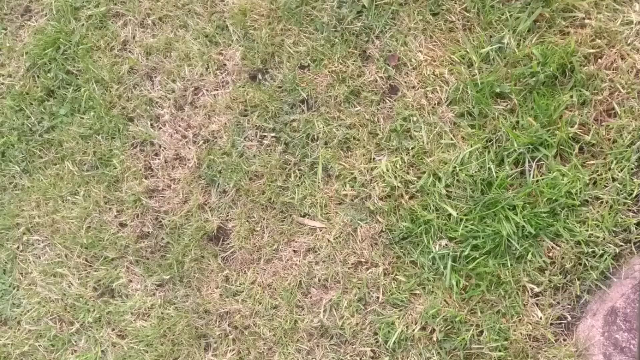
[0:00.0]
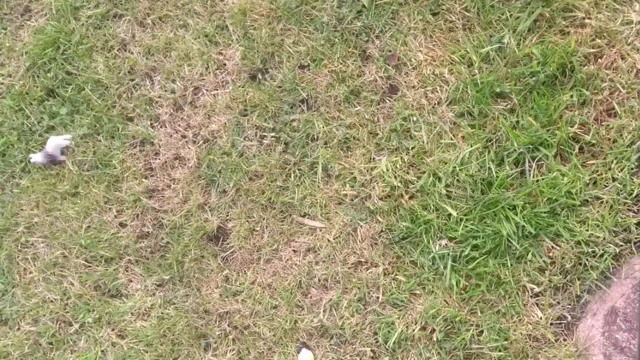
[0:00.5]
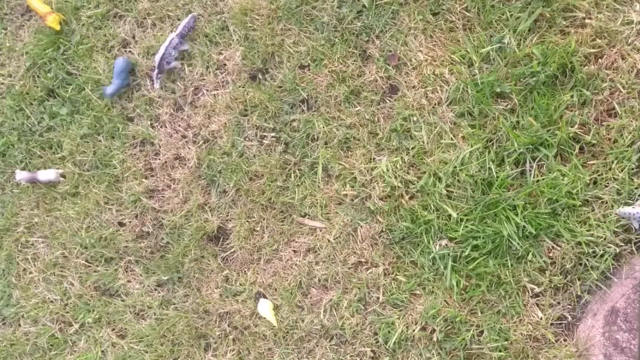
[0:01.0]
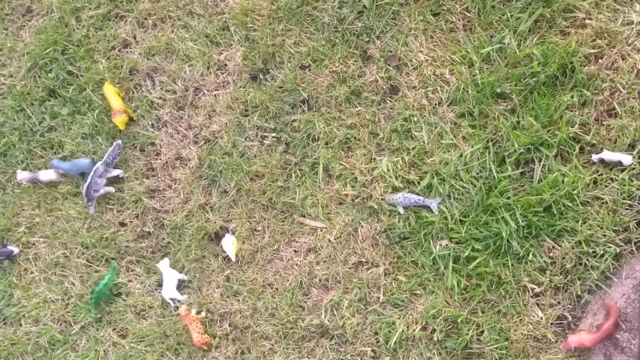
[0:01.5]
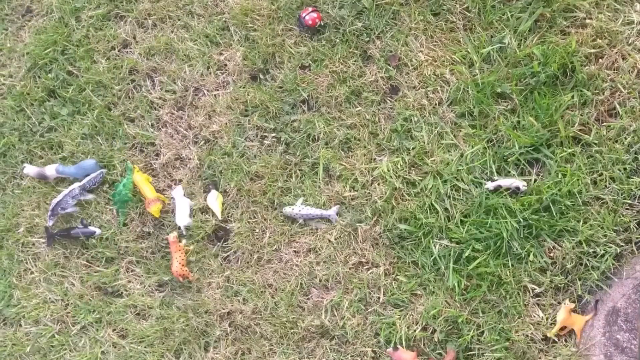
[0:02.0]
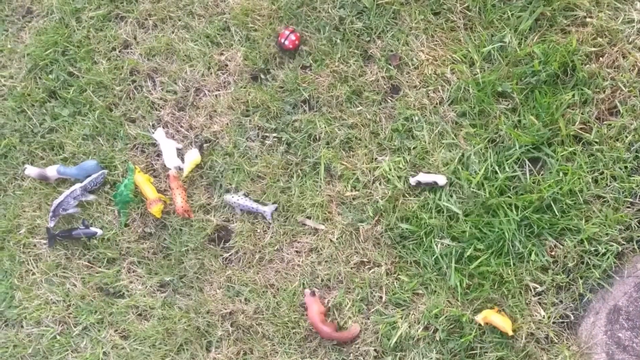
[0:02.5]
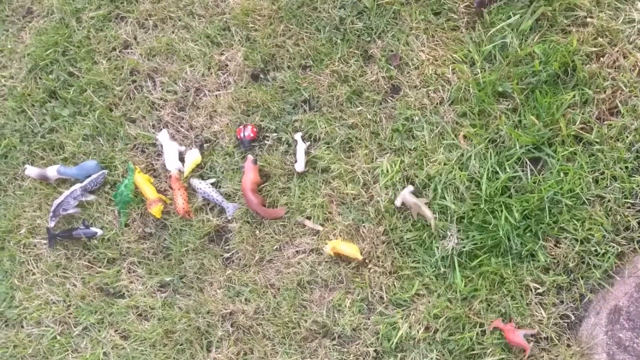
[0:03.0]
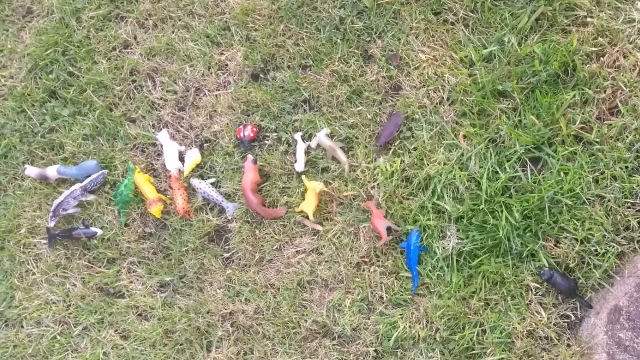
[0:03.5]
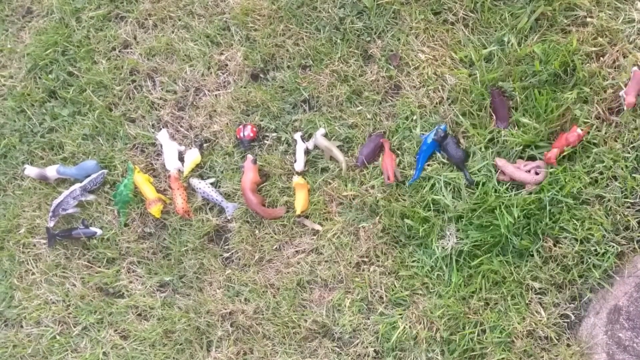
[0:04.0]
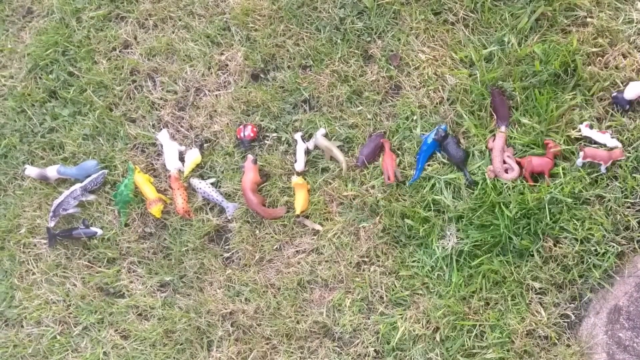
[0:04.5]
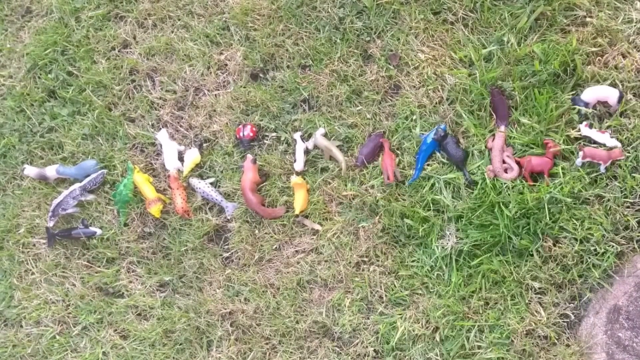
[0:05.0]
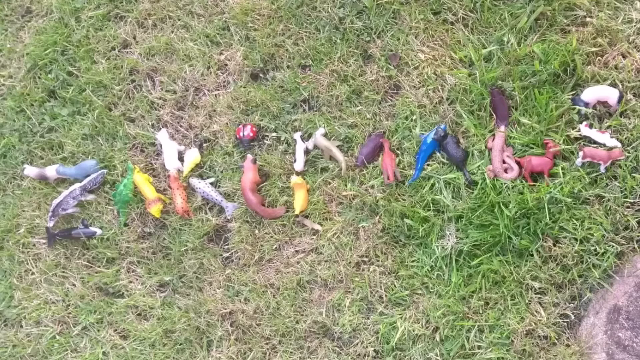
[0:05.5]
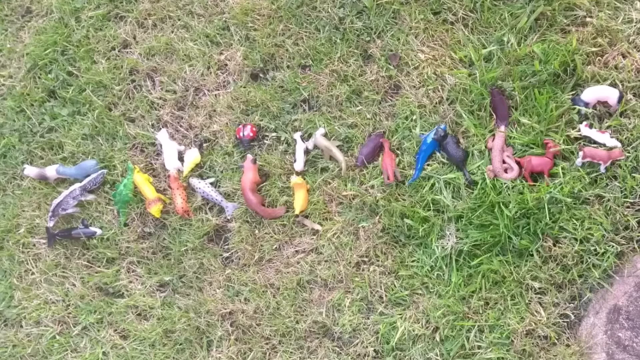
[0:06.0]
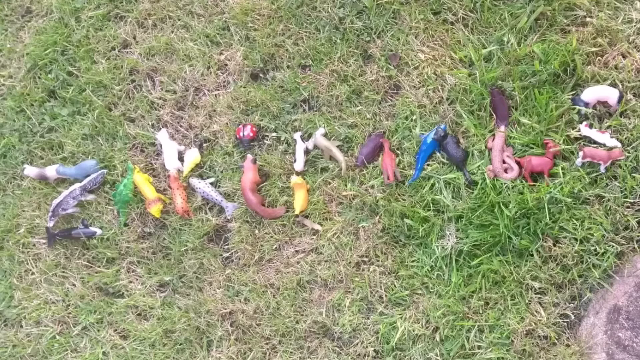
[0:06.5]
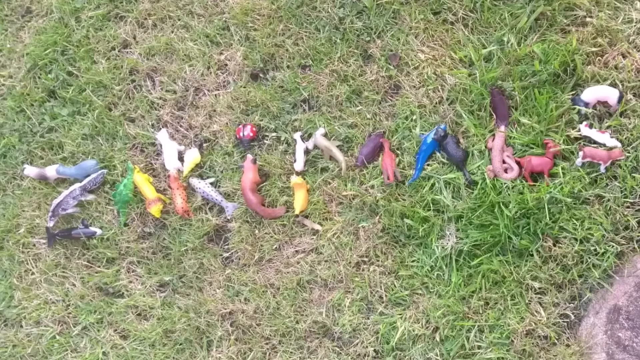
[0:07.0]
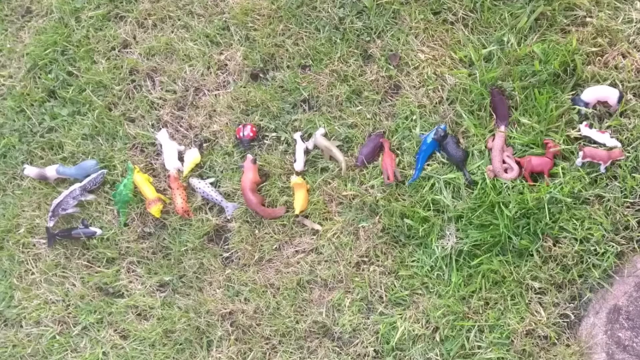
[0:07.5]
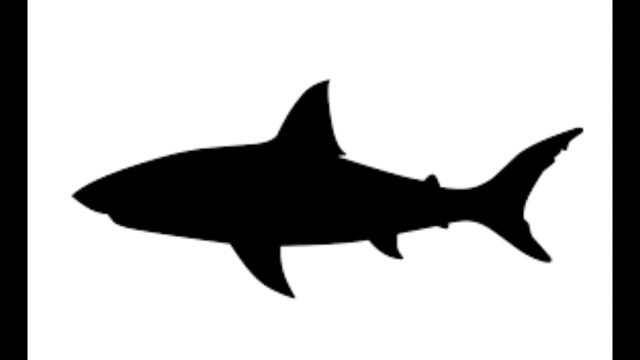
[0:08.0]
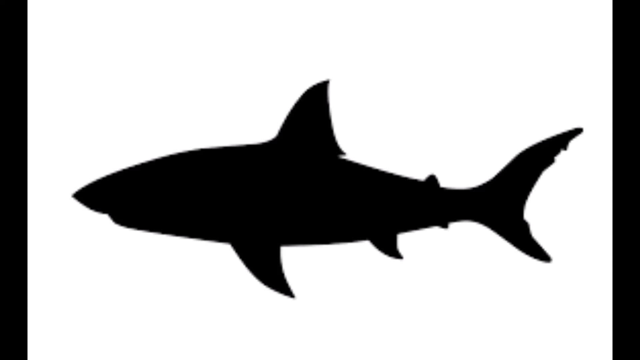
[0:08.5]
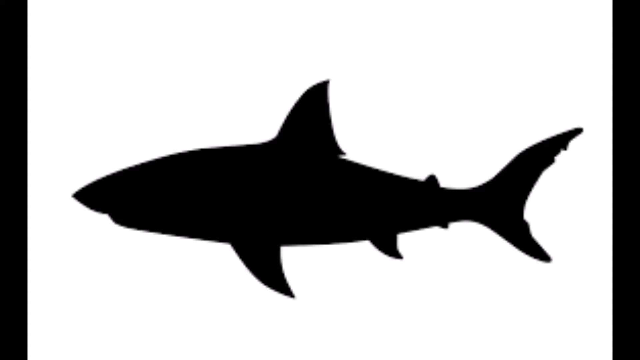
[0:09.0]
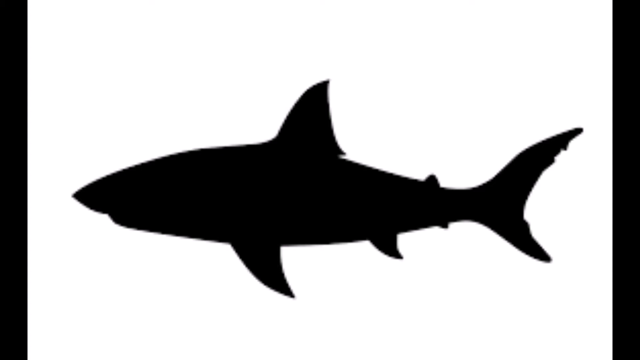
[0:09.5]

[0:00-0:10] Shark figures that look kind of like kids' toys appear, and then the scene goes into a silhouette of a shark. A group of little animals seem almost to come running into the grass, and then they kind of stop. The shark silhouette is a black shark on a white background. Everything is on top of grass that is green, with some of it brown, where all the animals are. The animals look like toys that kids would play with.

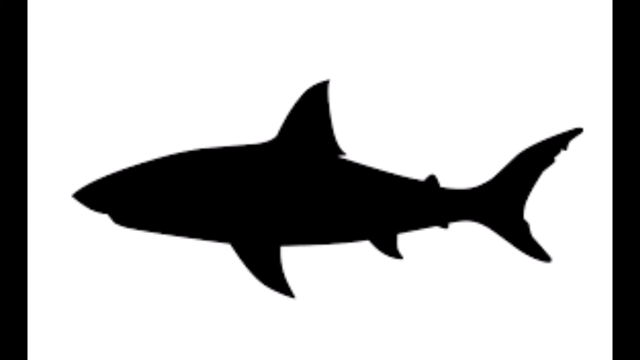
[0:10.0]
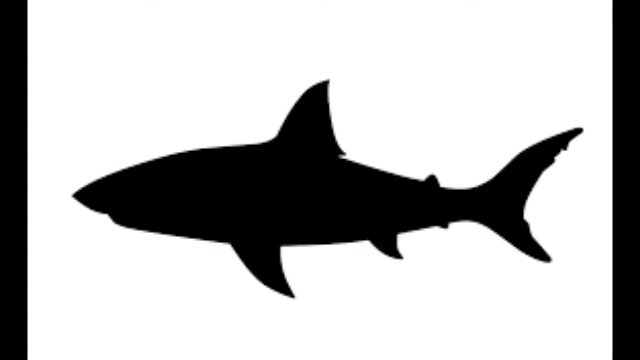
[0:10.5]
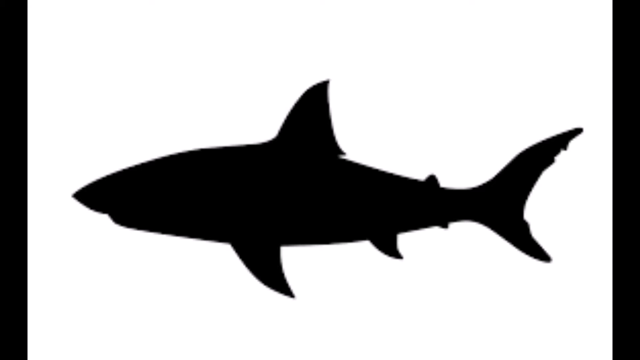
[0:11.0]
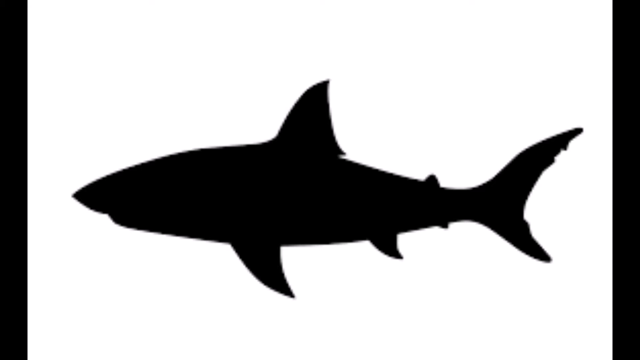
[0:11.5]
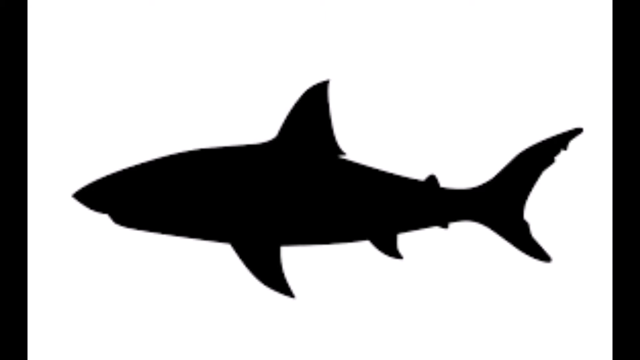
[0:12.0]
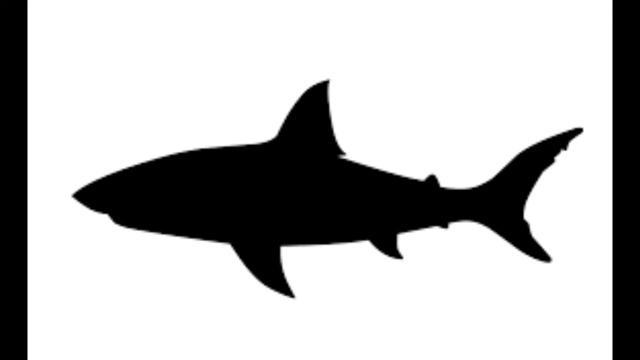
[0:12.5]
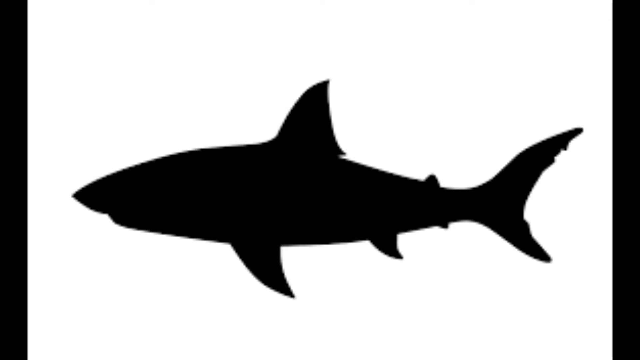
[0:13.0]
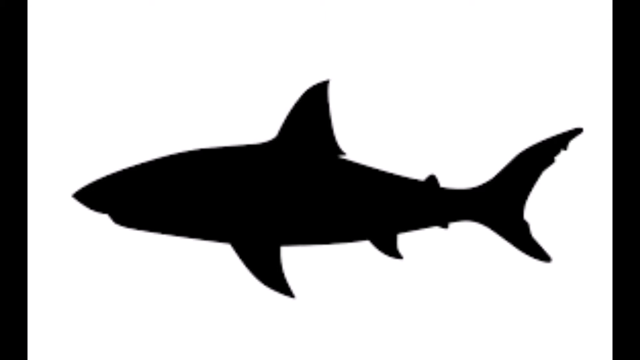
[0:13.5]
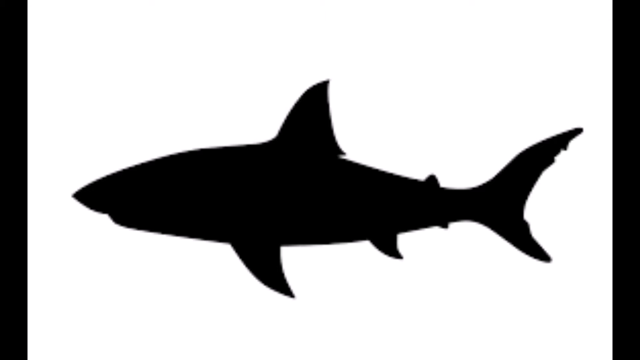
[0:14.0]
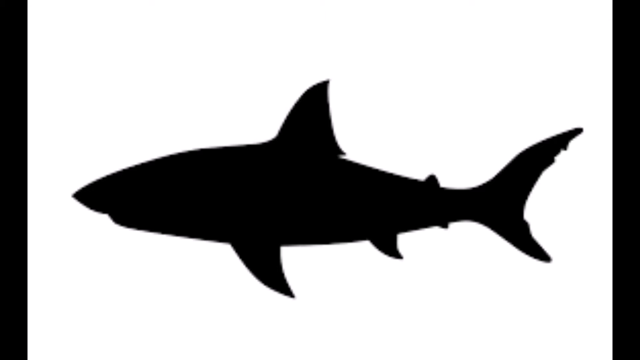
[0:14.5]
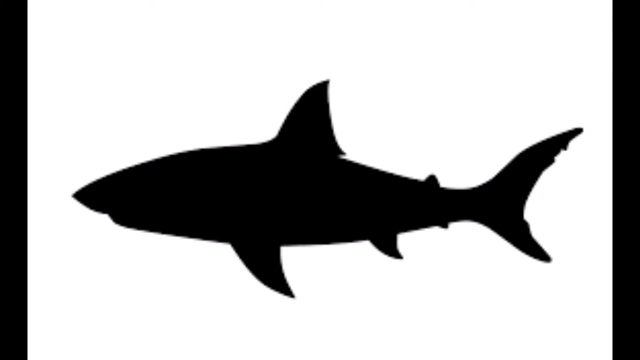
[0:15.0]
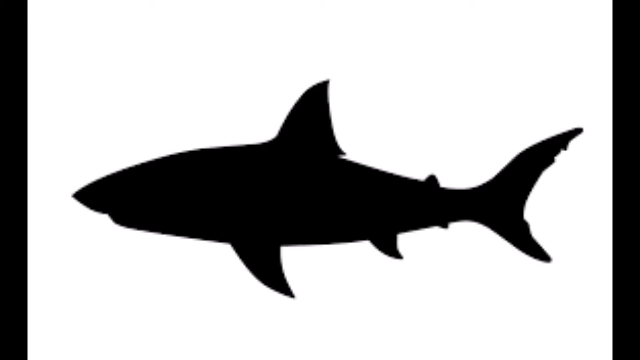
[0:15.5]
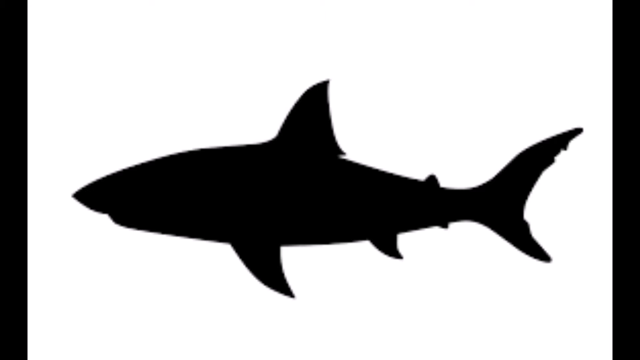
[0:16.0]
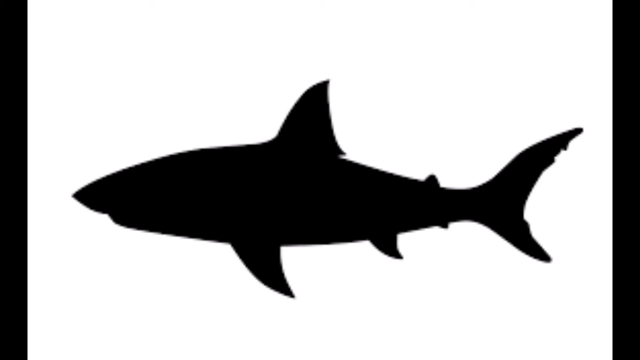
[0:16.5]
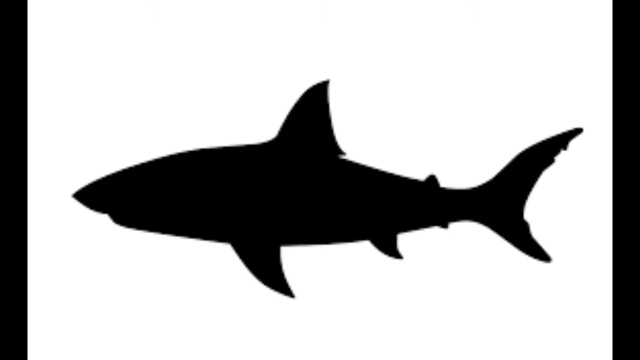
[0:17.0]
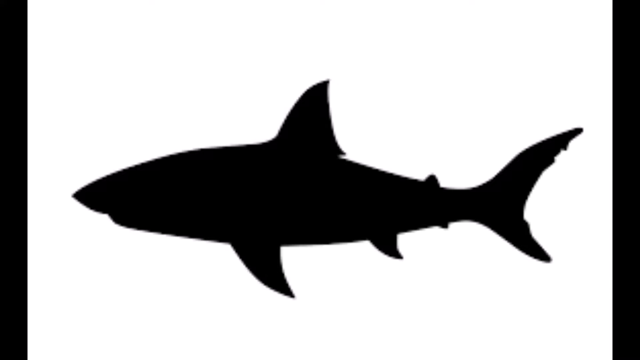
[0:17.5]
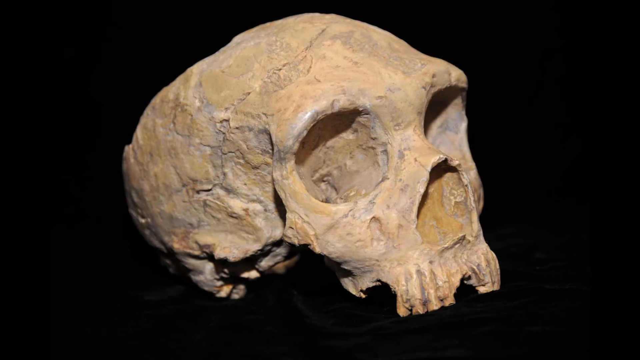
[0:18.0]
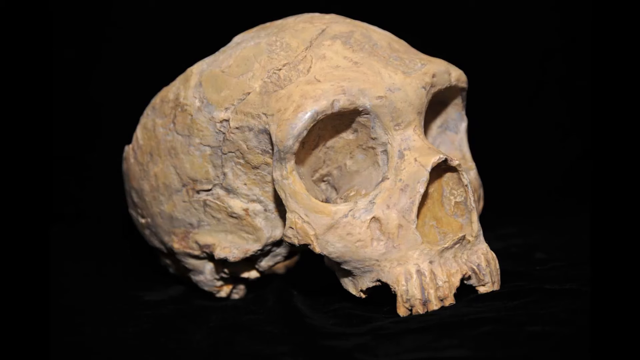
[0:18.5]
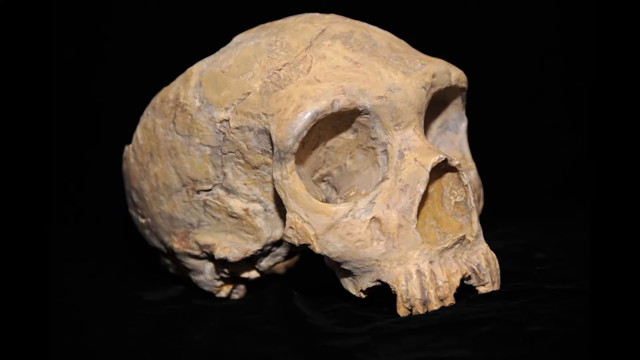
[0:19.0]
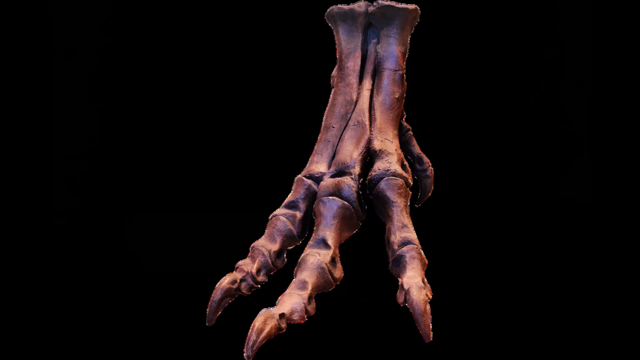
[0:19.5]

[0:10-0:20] A white screen shows a black shark, with its whole body visible. Then the image changes to a light brown skull with two eye holes and the nose cut out. Next comes a light brown and tan brown object with almost like three fingers or three legs, on a black background. It looks like it could be either a foot from the ankle down or a hand, and it is very large, so it could be from some kind of animal.